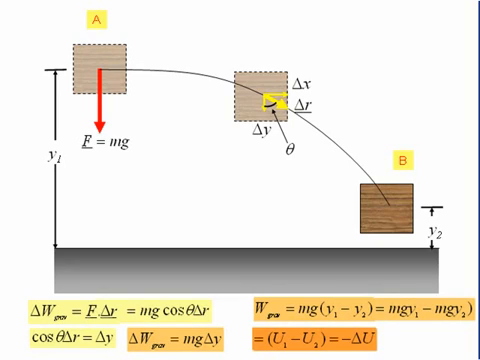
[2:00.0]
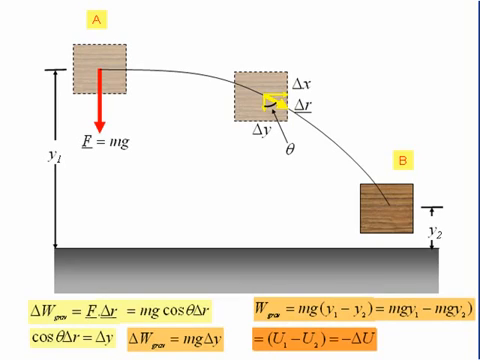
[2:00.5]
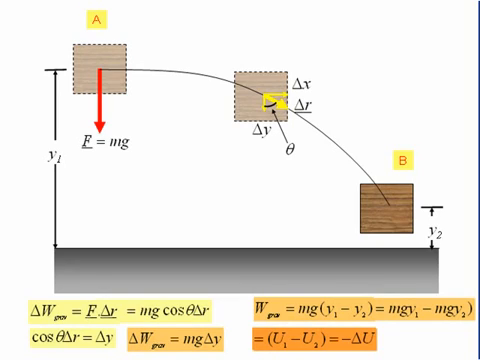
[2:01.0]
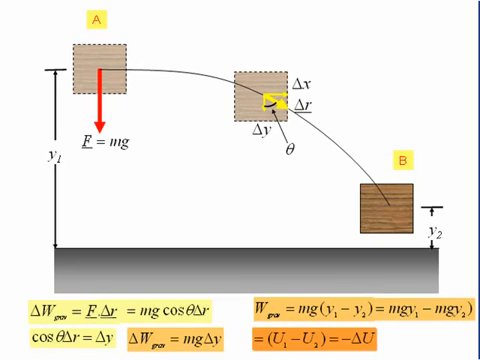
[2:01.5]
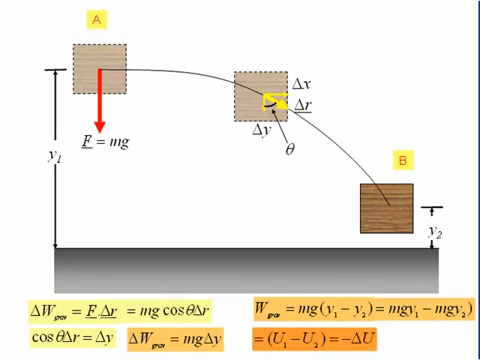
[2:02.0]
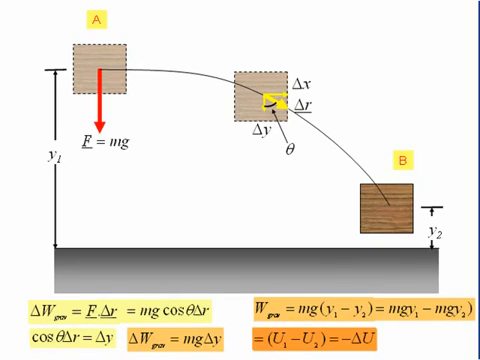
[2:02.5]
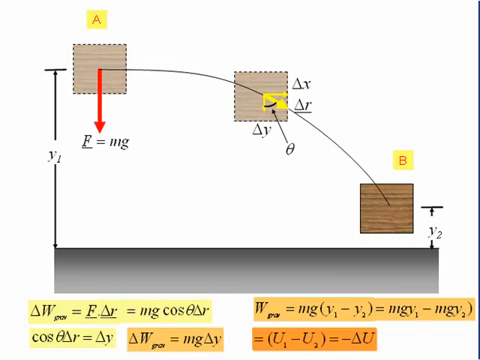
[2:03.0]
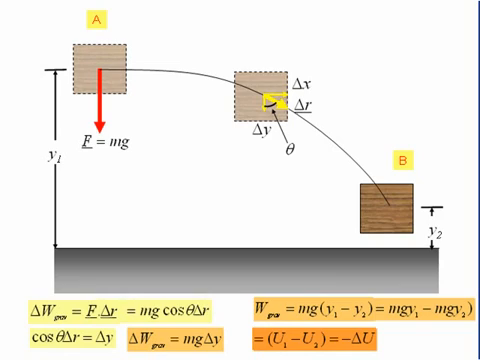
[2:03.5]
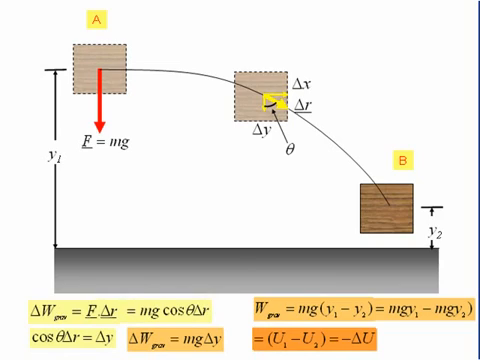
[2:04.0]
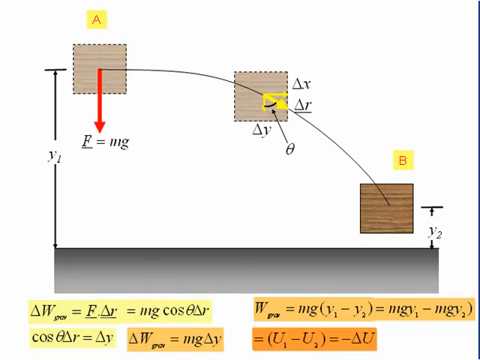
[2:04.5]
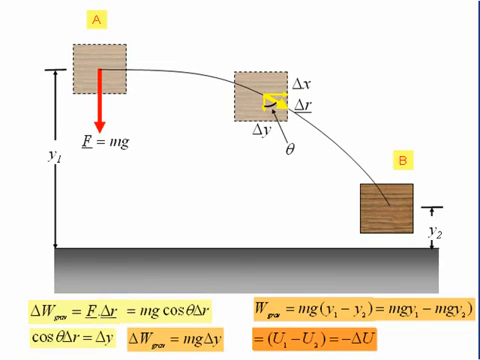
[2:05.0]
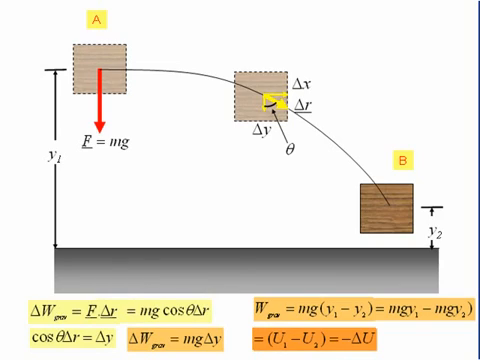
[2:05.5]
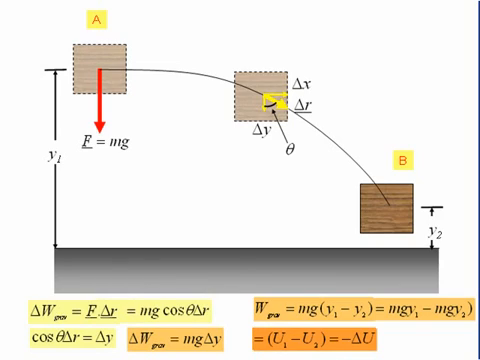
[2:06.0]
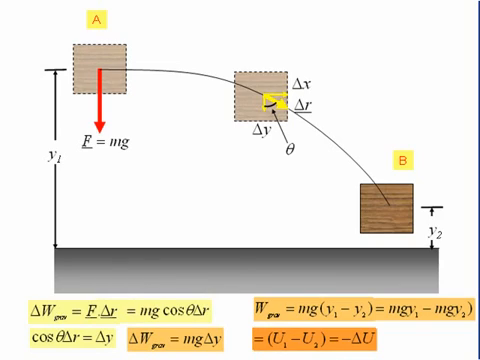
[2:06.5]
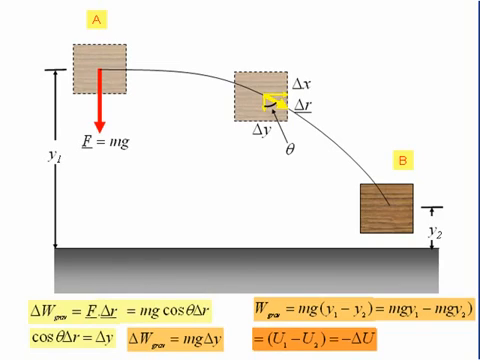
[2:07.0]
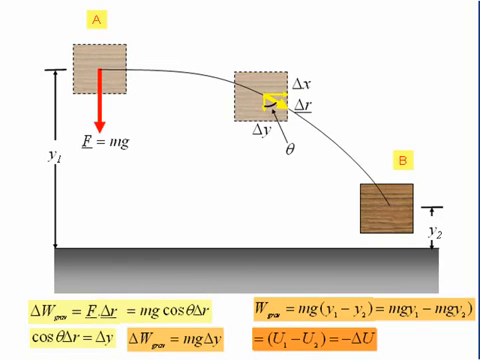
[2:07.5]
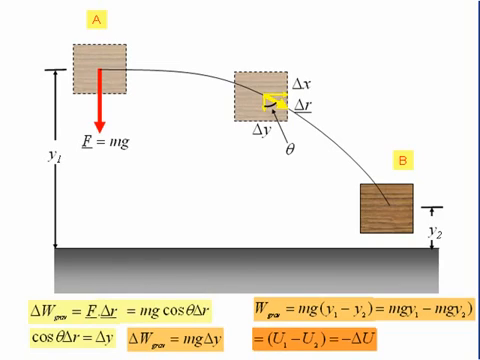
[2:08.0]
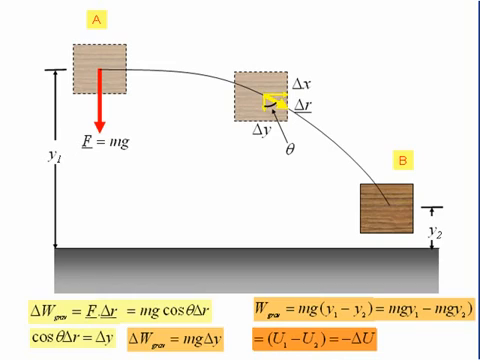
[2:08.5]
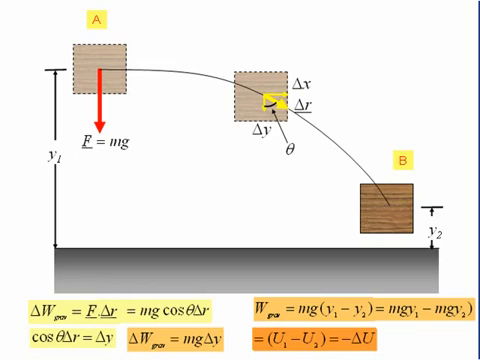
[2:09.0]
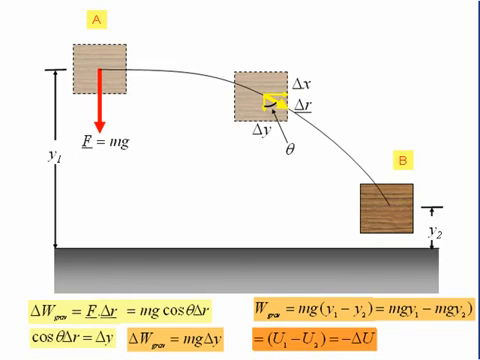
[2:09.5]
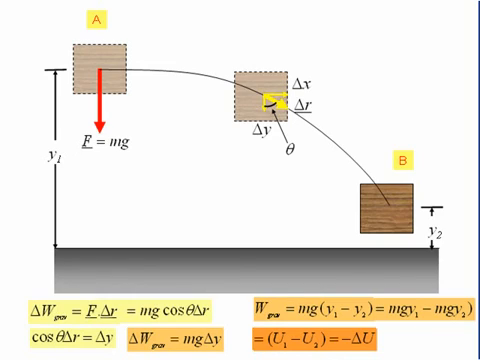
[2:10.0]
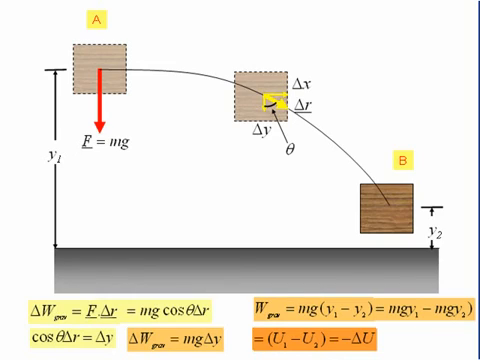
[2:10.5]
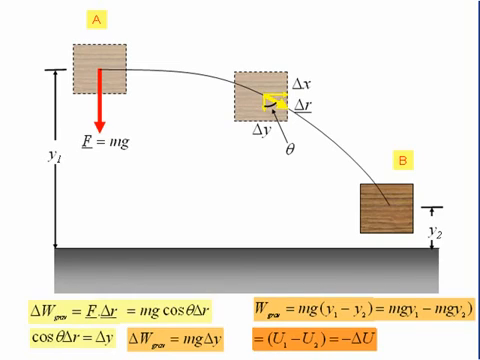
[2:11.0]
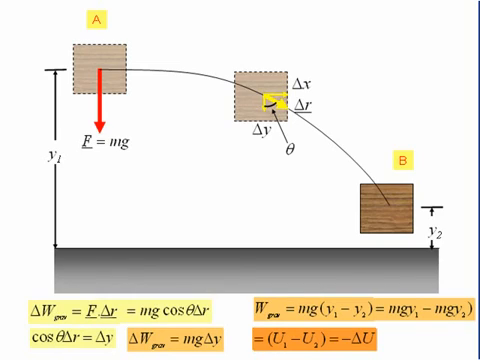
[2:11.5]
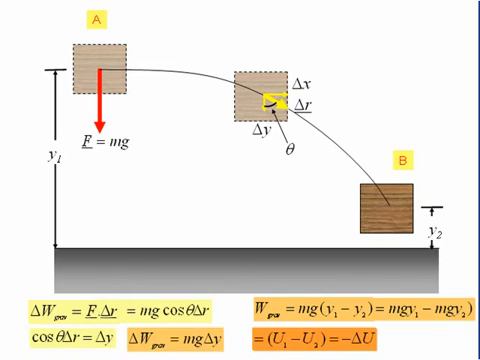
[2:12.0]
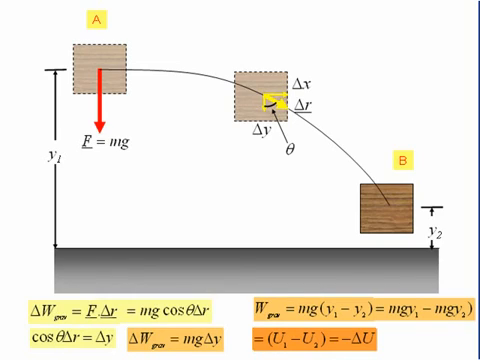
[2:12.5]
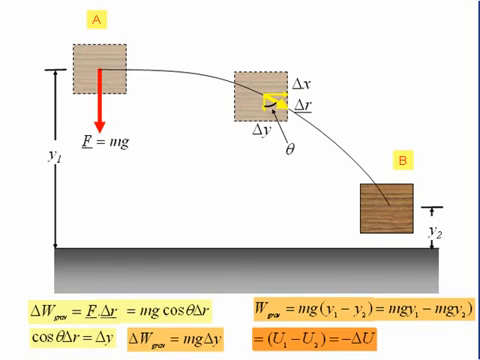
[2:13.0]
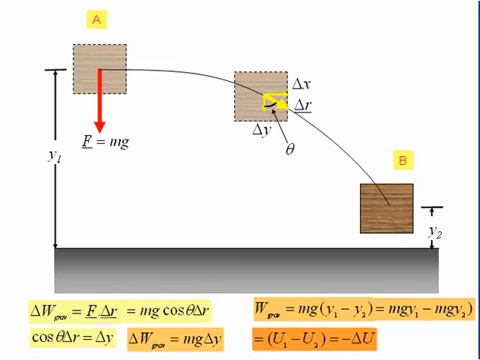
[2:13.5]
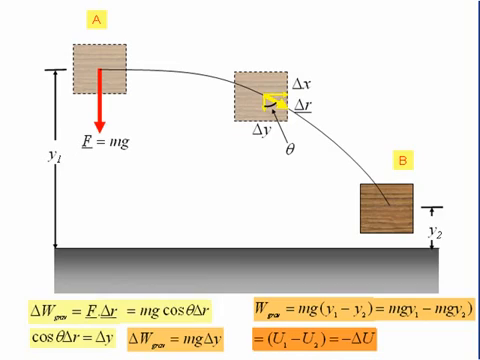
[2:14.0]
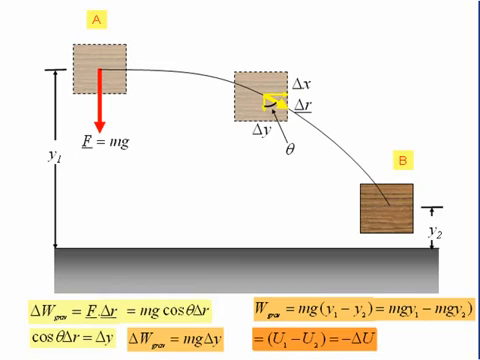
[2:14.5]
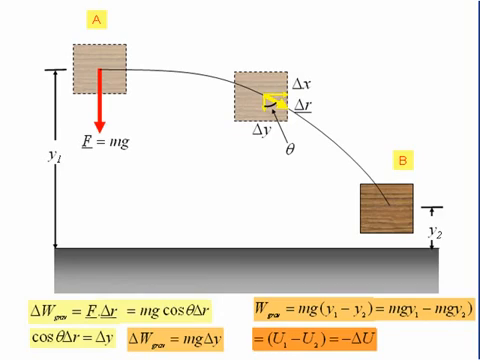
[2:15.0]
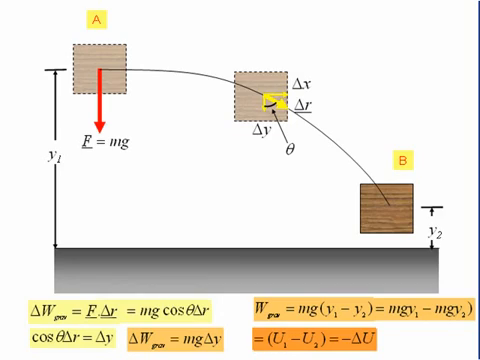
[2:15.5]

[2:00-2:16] For some seconds nothing else new appears. The visual still shows the three boxes at the top, one at the top, one in the middle and one at the bottom, with the same labels A and B and other labels including an equation, as well as the distances from the middle of the boxes to the top of the grey box labelled Y₁ and Y₂. The equations highlighted in yellow and orange remain on the left side.